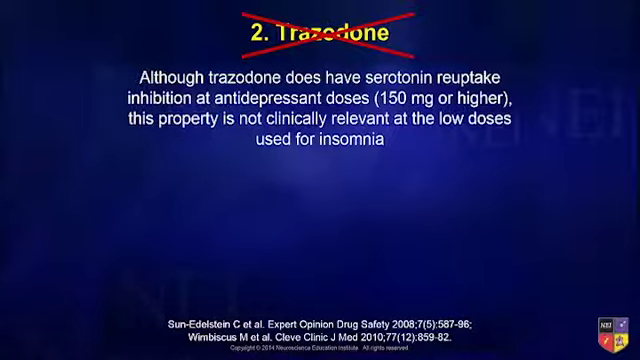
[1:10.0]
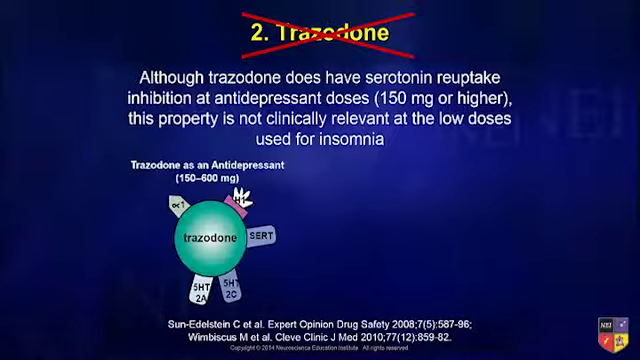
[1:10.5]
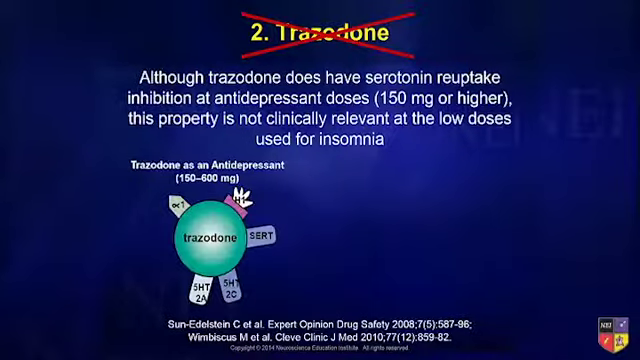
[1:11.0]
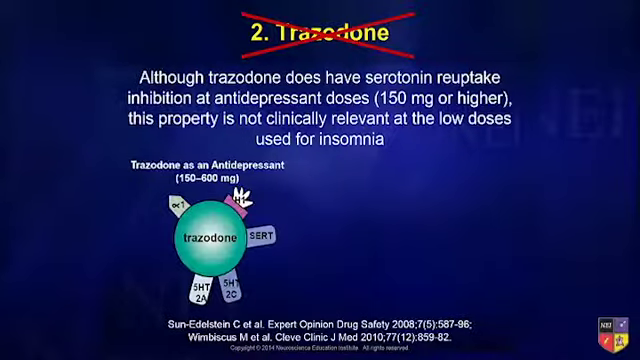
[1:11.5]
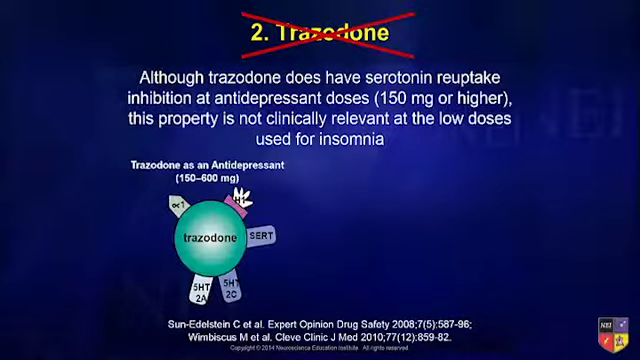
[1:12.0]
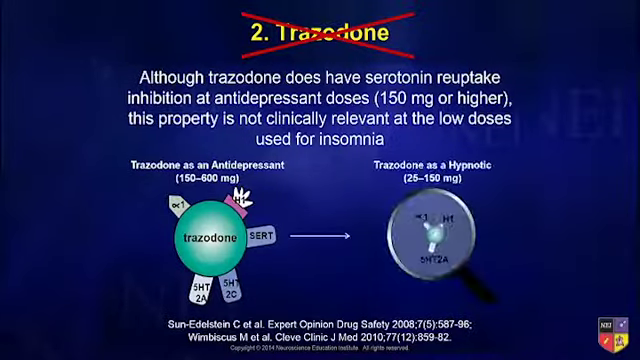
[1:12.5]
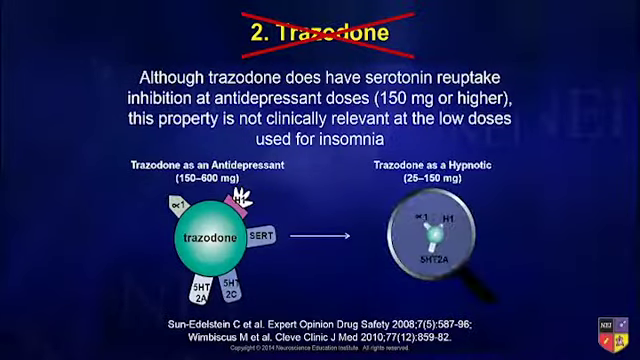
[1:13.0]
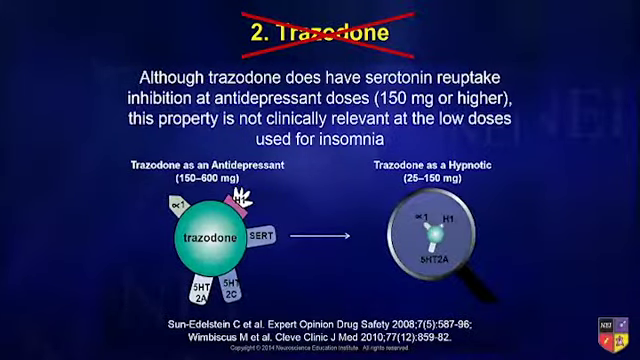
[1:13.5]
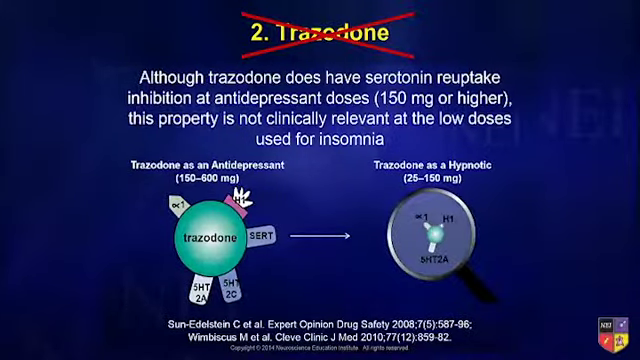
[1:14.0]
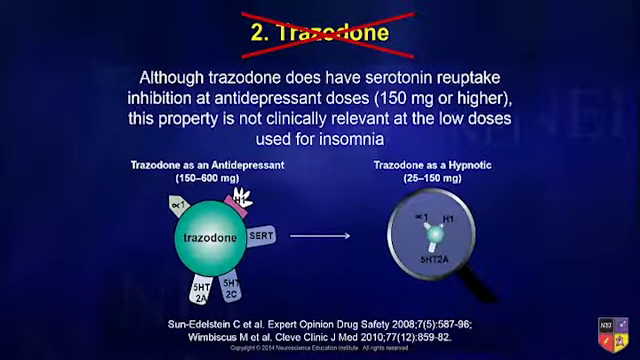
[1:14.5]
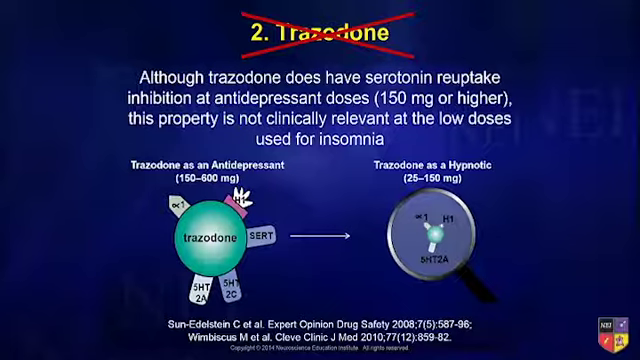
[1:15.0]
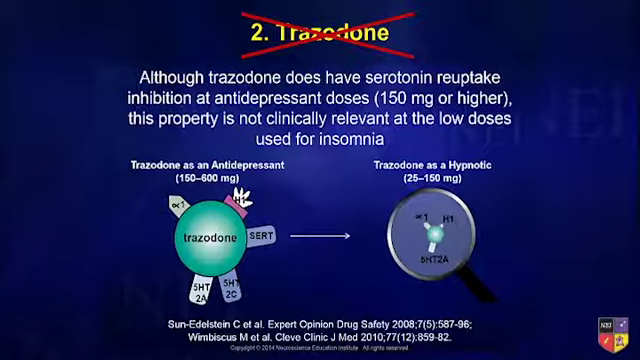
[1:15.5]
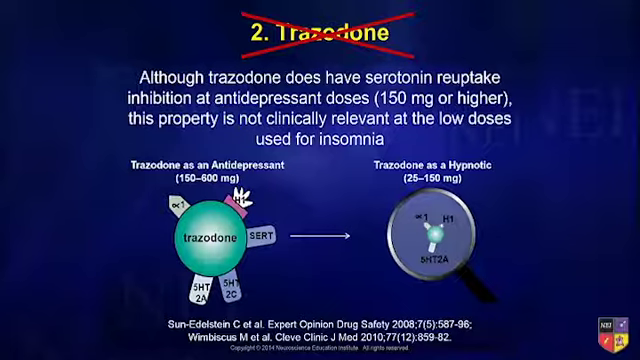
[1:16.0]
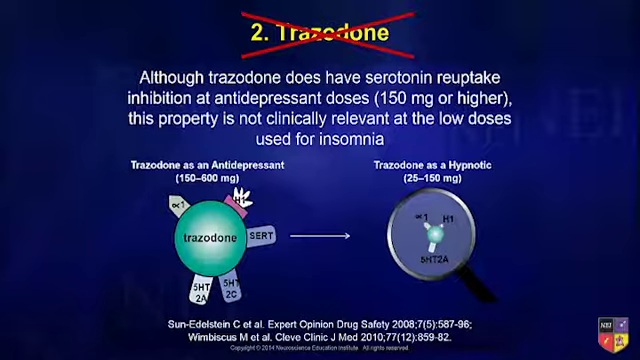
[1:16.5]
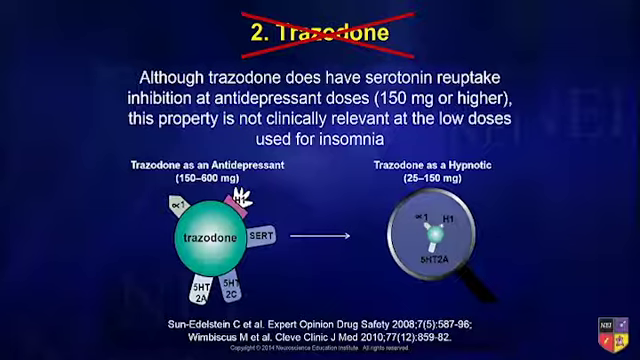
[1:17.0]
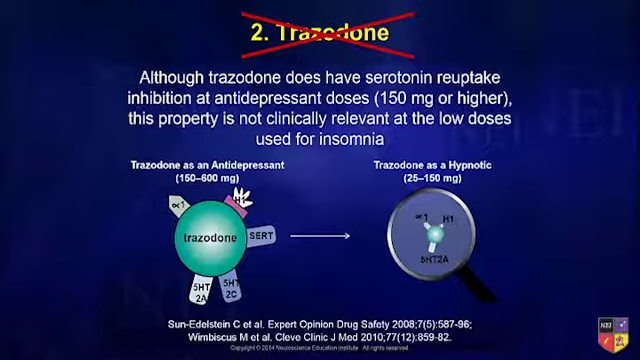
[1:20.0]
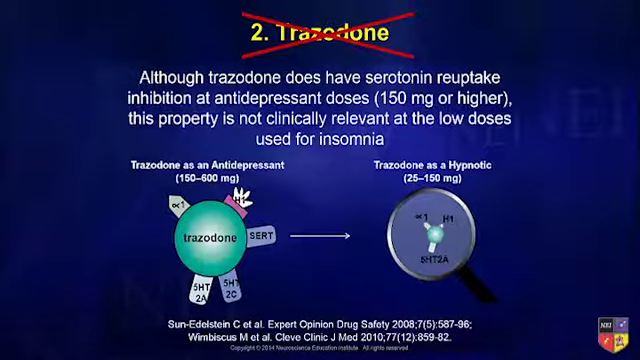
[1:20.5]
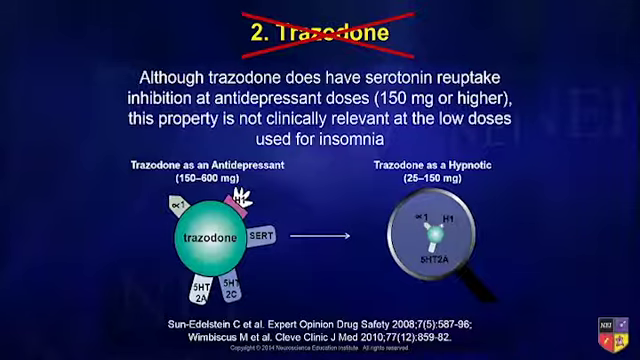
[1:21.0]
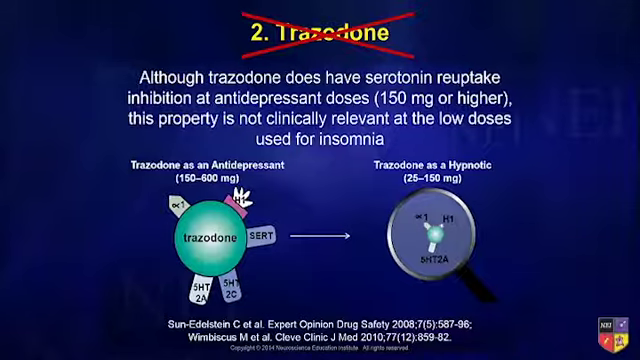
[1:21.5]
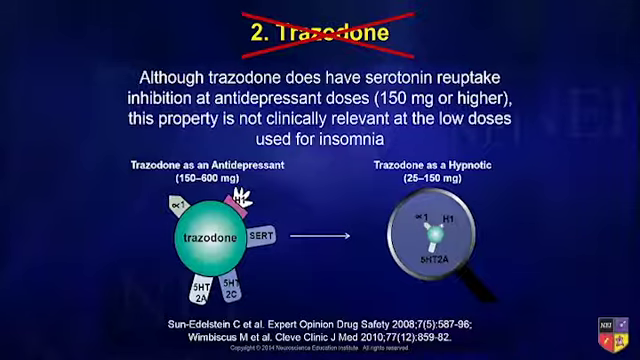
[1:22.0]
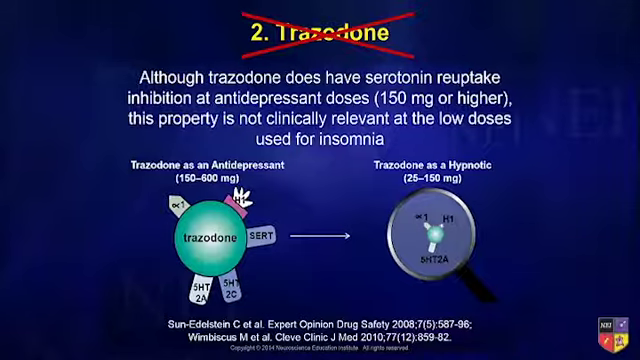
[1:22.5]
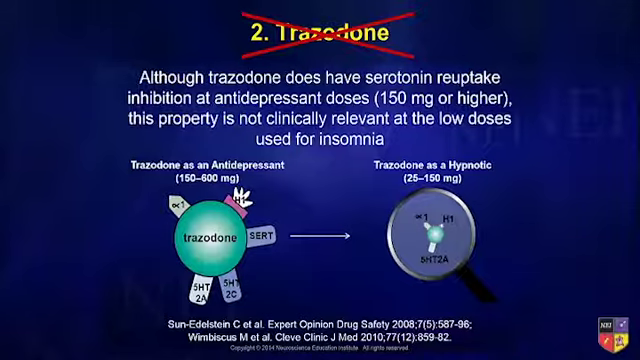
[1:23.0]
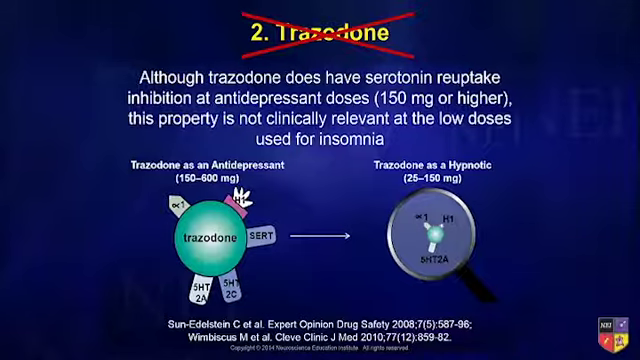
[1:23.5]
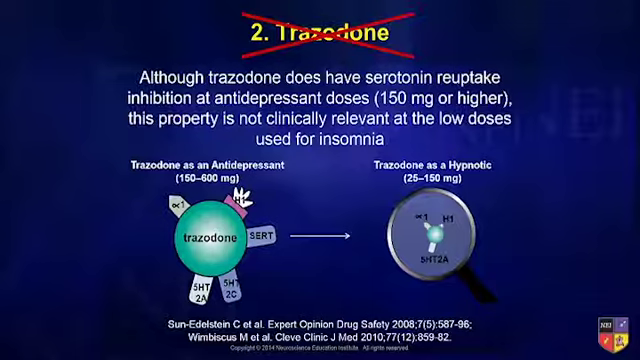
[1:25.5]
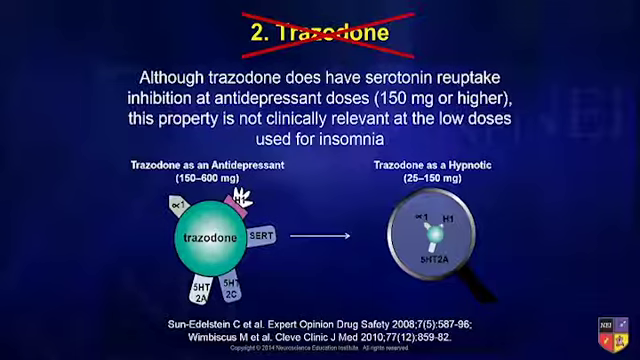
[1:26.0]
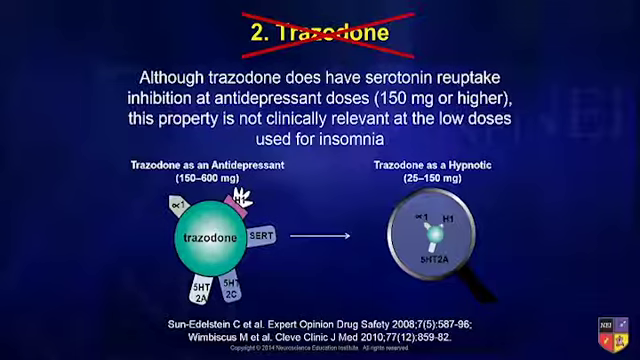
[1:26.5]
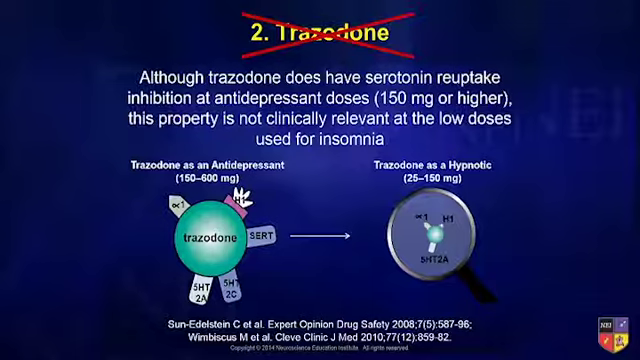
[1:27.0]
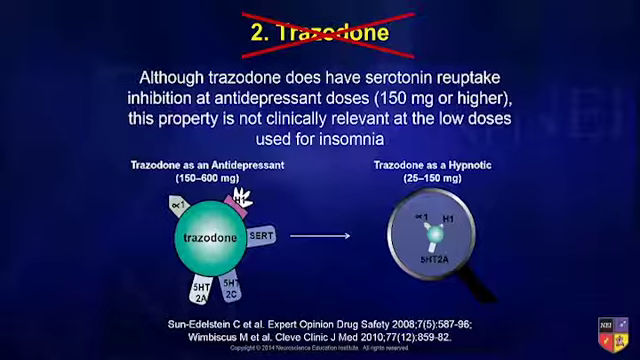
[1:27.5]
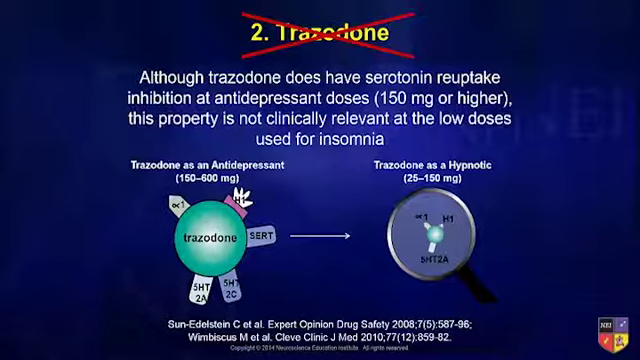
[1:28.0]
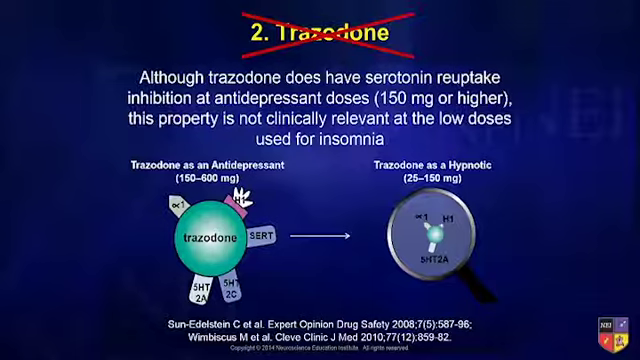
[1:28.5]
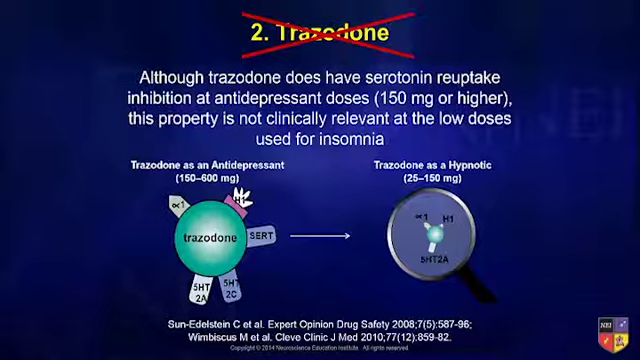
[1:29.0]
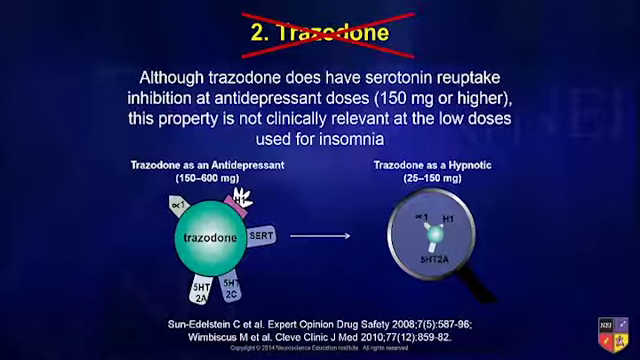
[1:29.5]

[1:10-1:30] The same blue screen shows the yellow text "2 Trazodone" with a red cross through it, the white explanation underneath of why trazodone was not the correct answer, and white disclaimer text at the bottom. Below the white text on the left, a green circle appears with the word "Trazodone" in black on it. Five pieces, each blue, pink, or cream/white, are attached to the circle, labeled "1", "H1", "SERT", "5H72C" and "5HT2A". White text above the green circle reads "Trazodone as an antidepressant, 150 to 600 mg". A thin white arrow then appears in the middle of the screen pointing from left to right, and a magnifying glass appears with a silver rim, a black handle and a blue middle containing a green circle with three small white points coming off it; a black number 1 is at the top left just above the circle, "H1" is above the circle to the right, and "5HT2A" is below it. White text above the magnifying glass reads "Trazodone as a hypnotic, 25 to 150 mg".